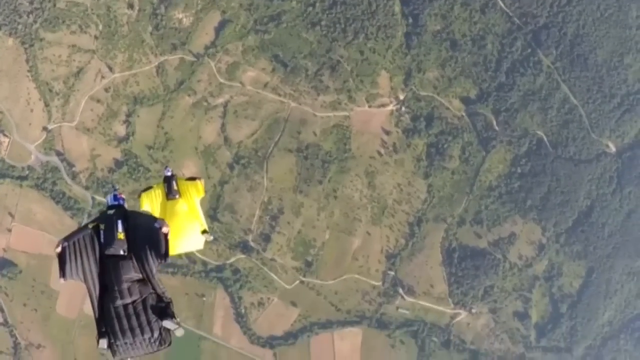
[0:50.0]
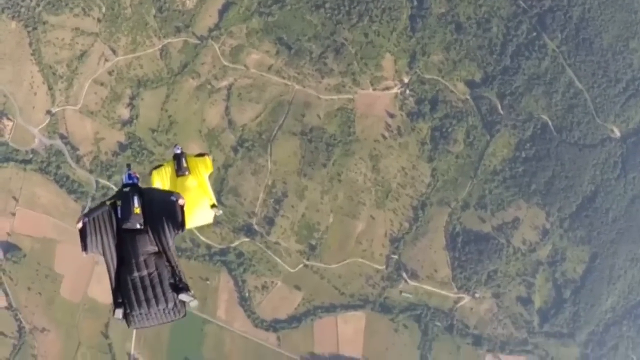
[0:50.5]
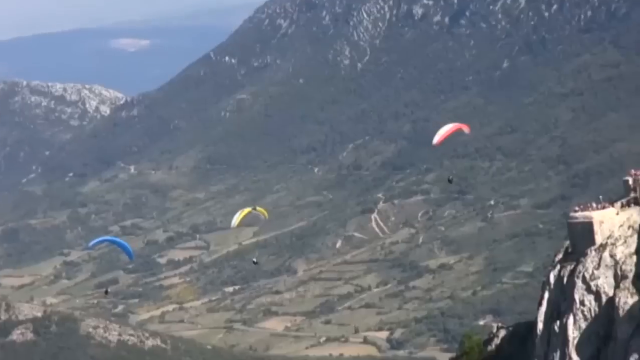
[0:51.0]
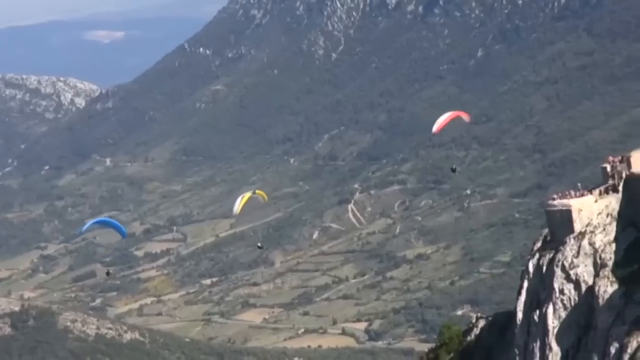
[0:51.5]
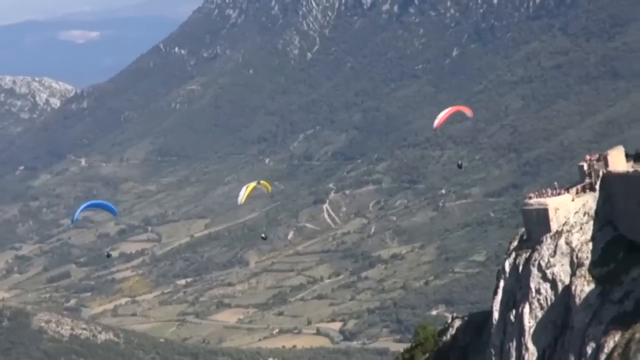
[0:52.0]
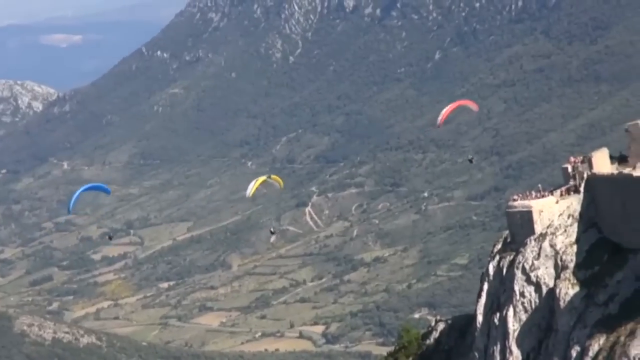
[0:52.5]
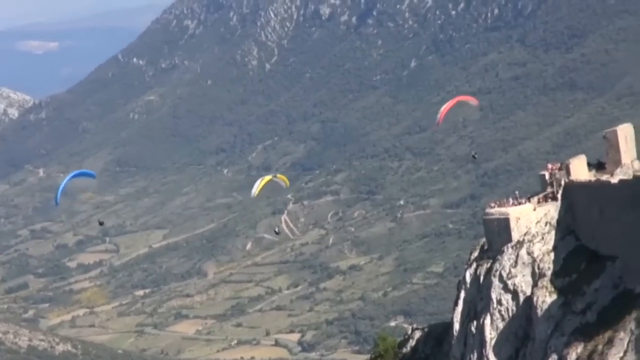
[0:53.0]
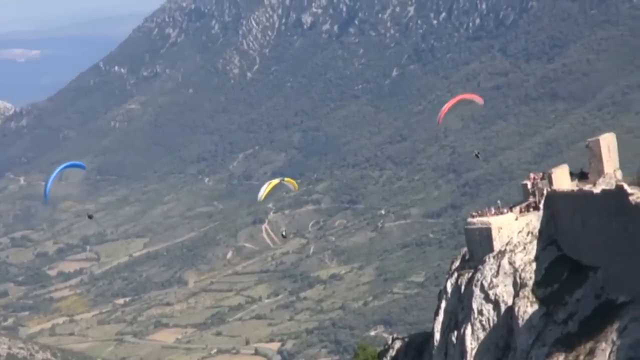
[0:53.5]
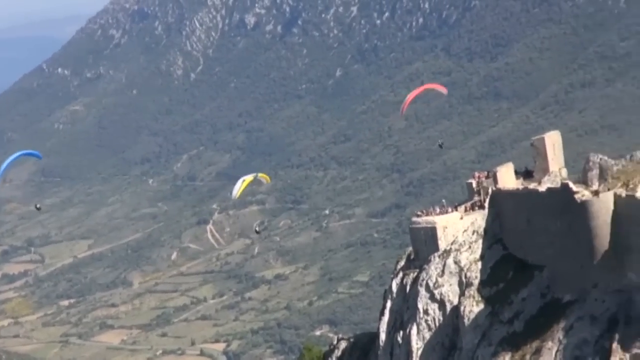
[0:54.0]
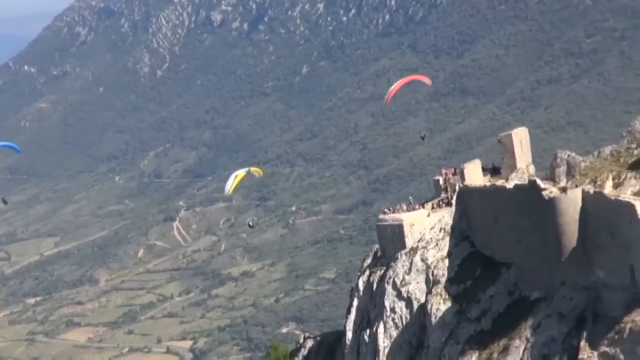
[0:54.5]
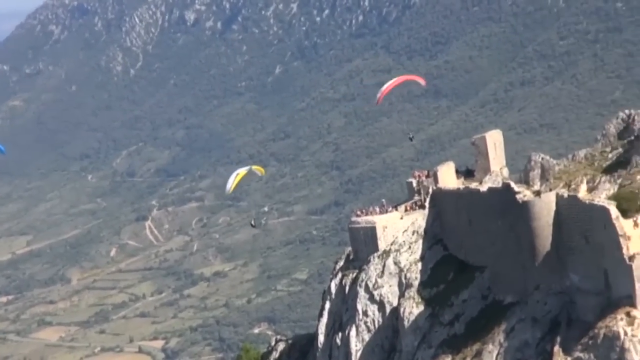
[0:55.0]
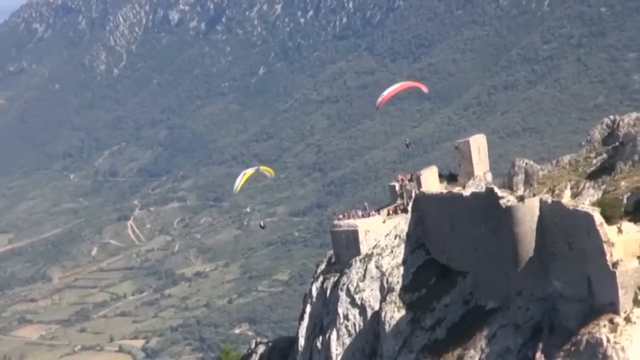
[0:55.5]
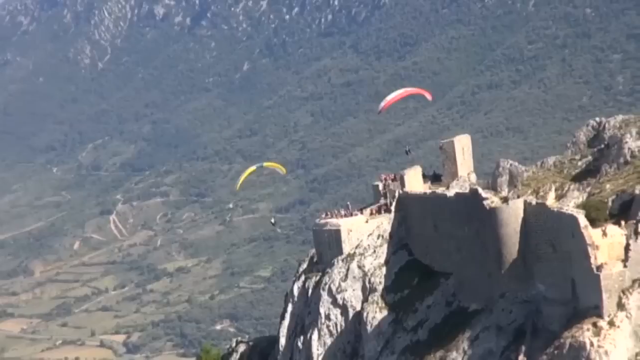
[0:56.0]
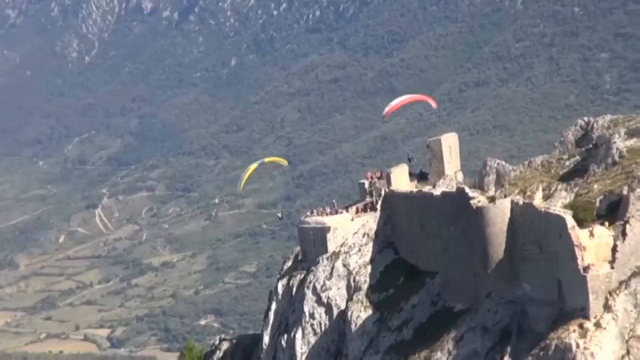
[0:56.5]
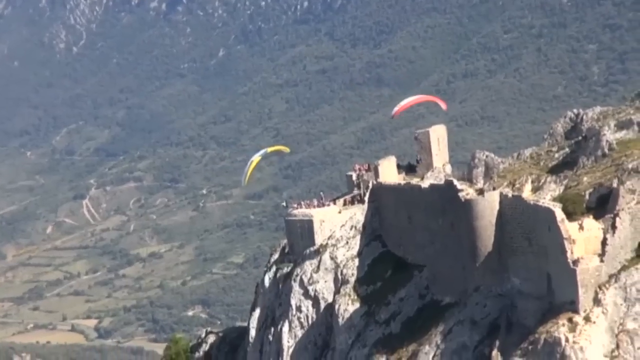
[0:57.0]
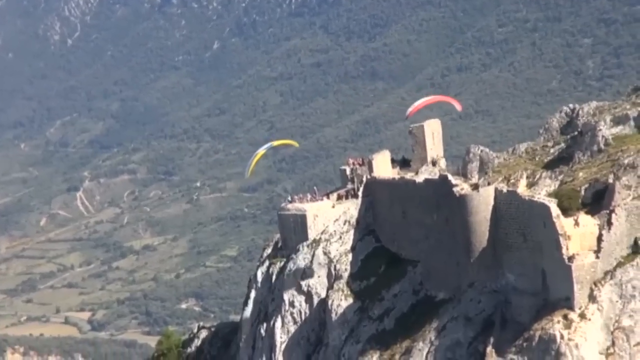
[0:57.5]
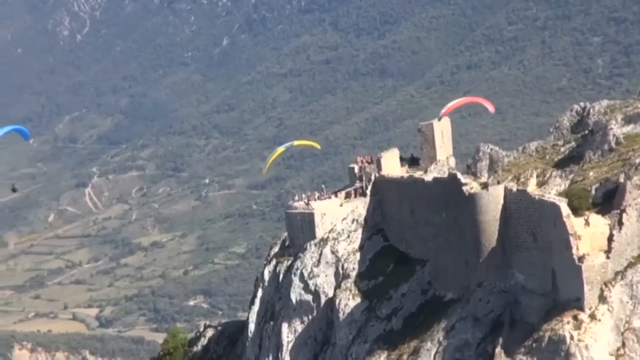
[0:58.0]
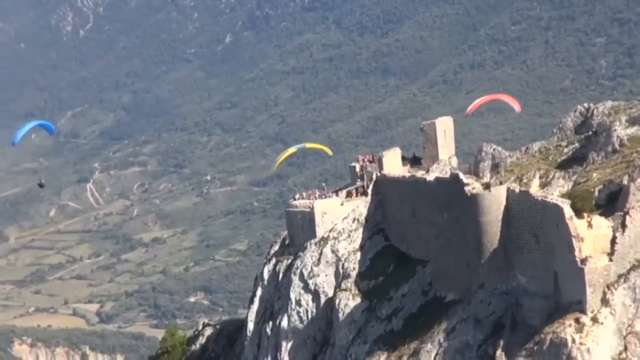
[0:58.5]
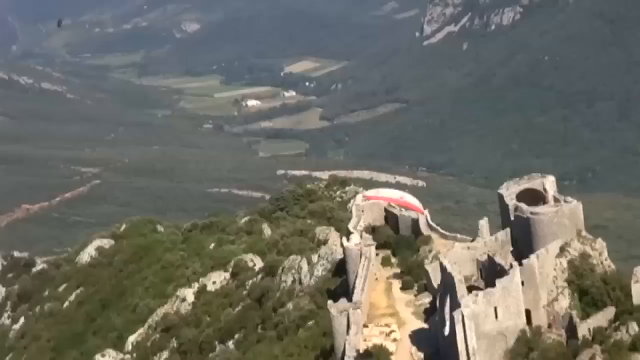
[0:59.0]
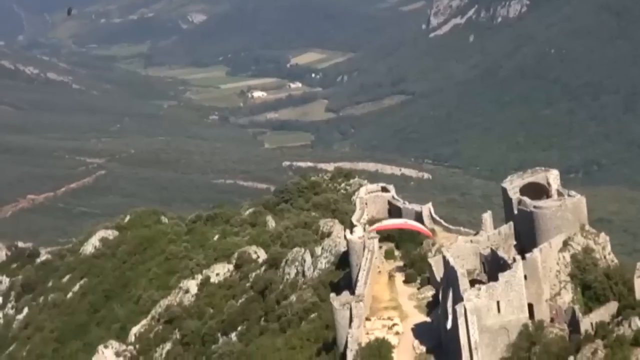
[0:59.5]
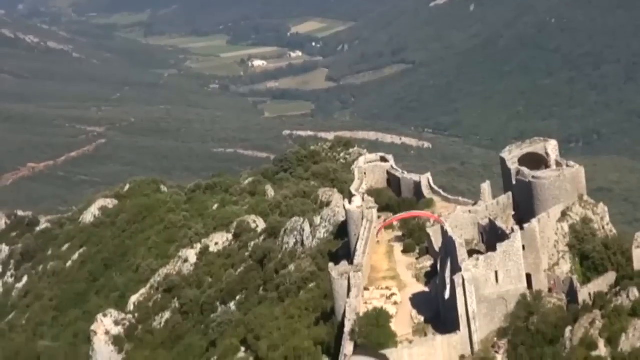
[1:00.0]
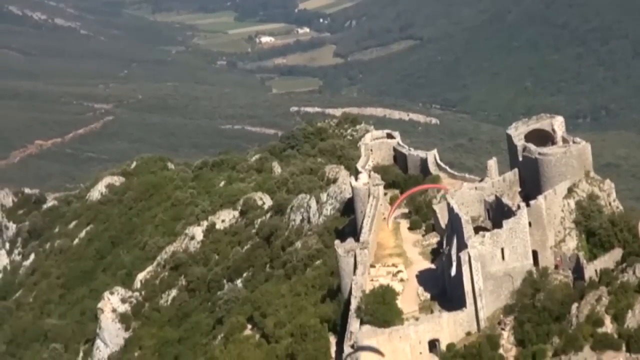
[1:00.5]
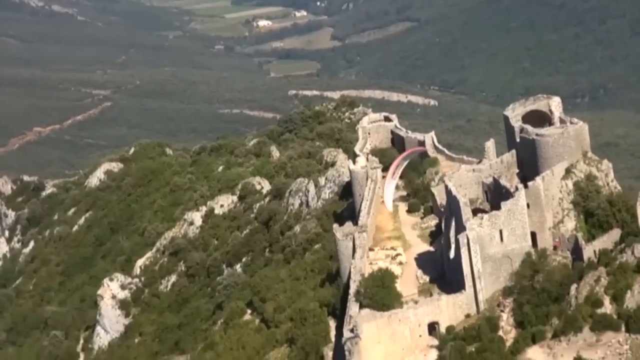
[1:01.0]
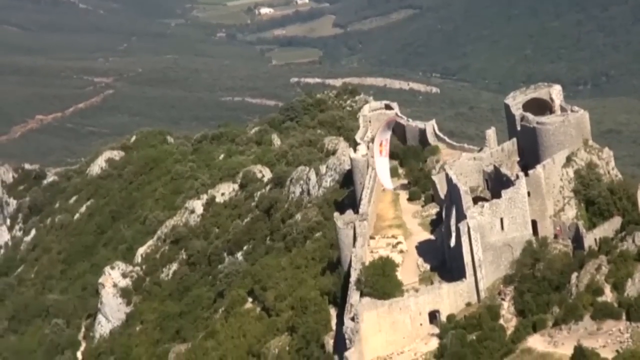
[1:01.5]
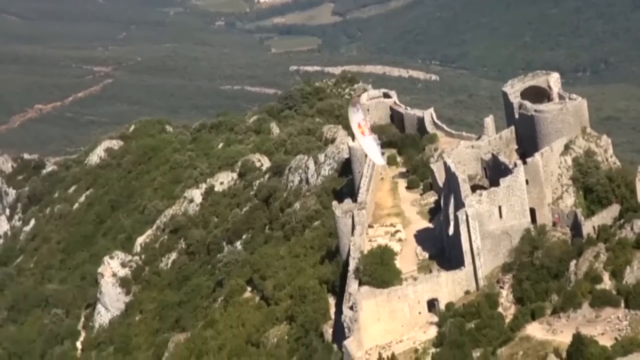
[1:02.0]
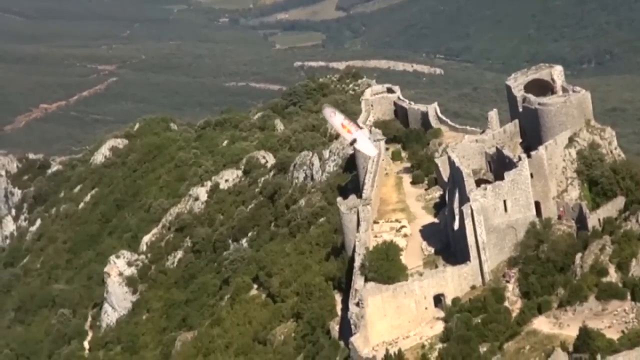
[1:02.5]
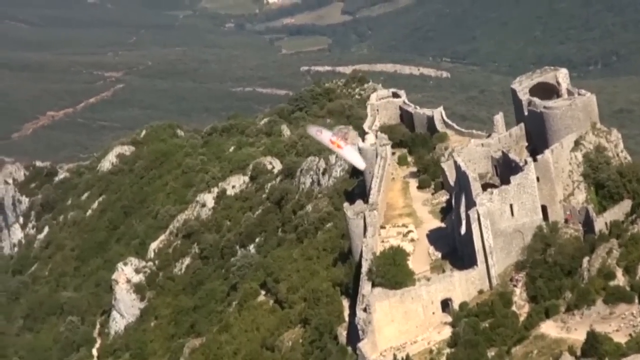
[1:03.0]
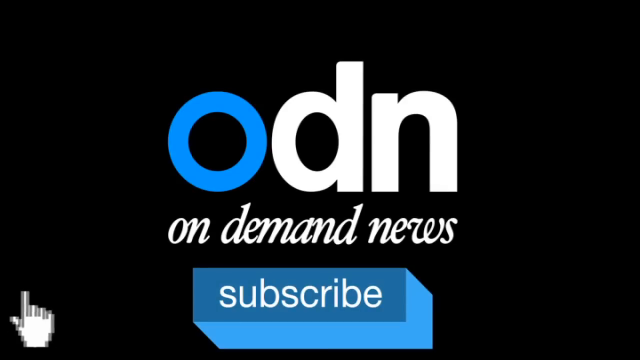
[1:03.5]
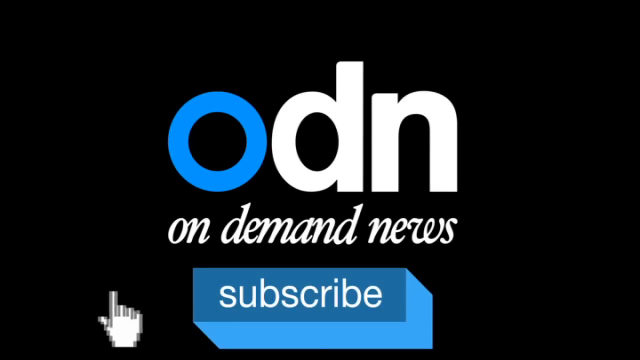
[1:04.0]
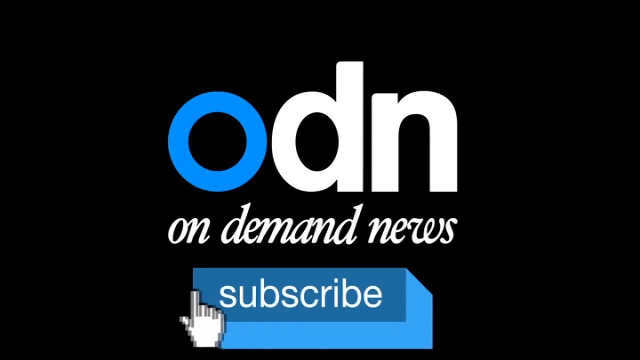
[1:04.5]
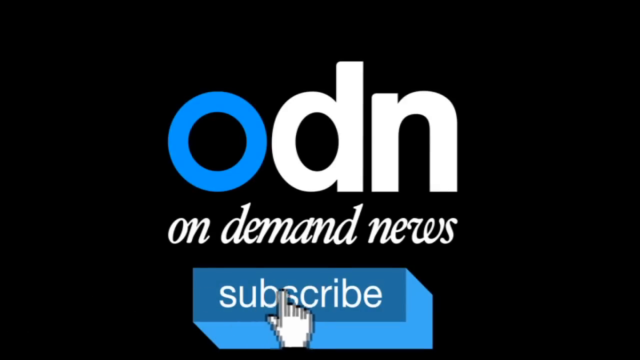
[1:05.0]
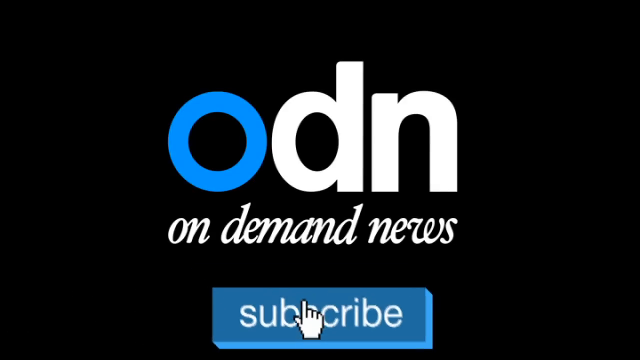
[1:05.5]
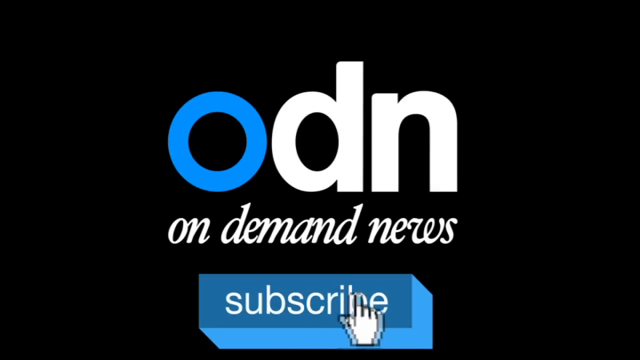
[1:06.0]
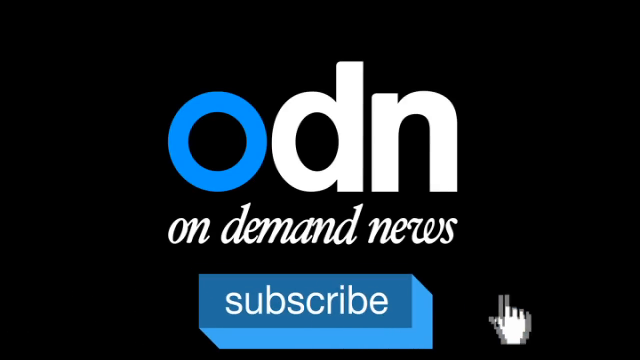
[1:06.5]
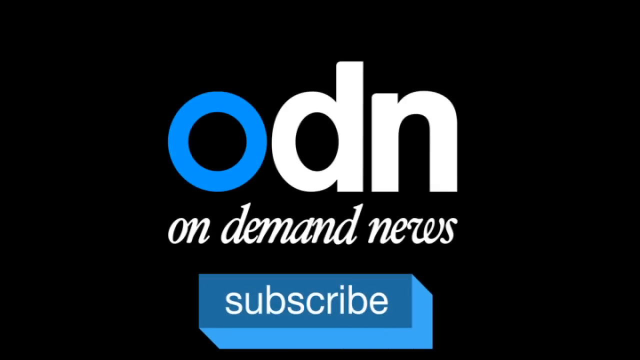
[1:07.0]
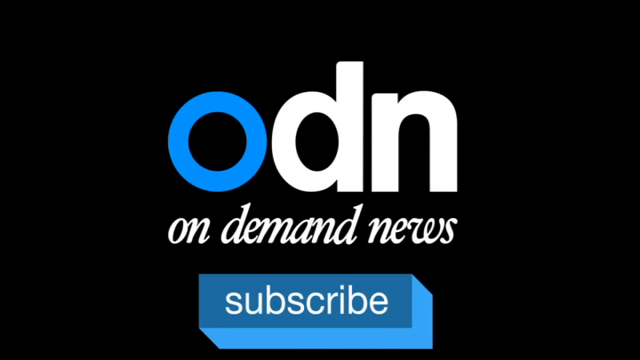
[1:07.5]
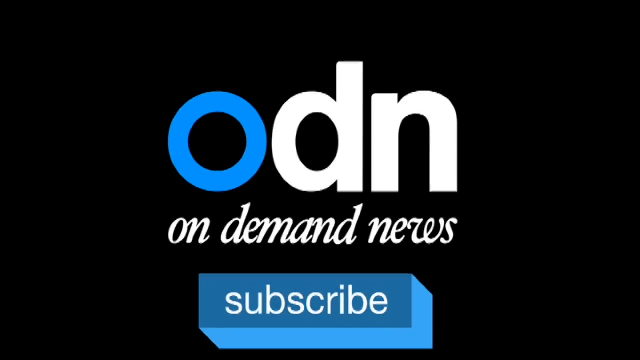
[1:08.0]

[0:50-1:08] Green trees are seen from very far up, as if from where a helicopter is. A bit of road comes in from the left and branches off, one part going down to the right and one going up to the right. Thick trees run across the top and down the right side, with grass and a few trees on the left covering most of the left side past the center. The guy in black is in the bottom right corner, and a little under him is the yellow one, both floating down with arms and legs out. Next, a wide shot shows three paragliders going over people, who stand on an edge in the bottom right as little dots far away. From right to left there is a red one, a yellow one and a blue one, spread out evenly across the frame and sliding across. As they get closer, the red one and the yellow one go over the top of the people, still heading right. Then one guy kind of swings around in the air, his paraglider flipping half upside down as he gets whipped around. The video then cuts to a black background with blue; in white it says "ODN" and below that, in white, "on-demand news". A blue subscribe button appears, a hand comes in and presses it down, and the hand goes off the right side.